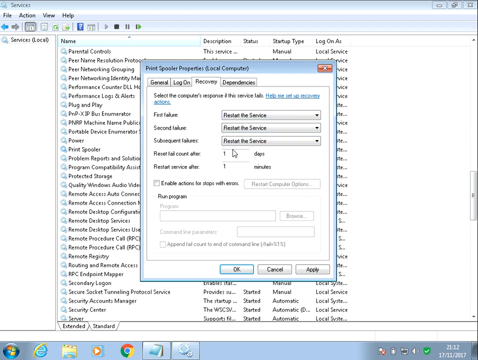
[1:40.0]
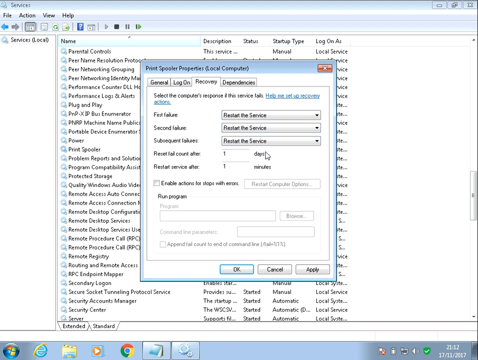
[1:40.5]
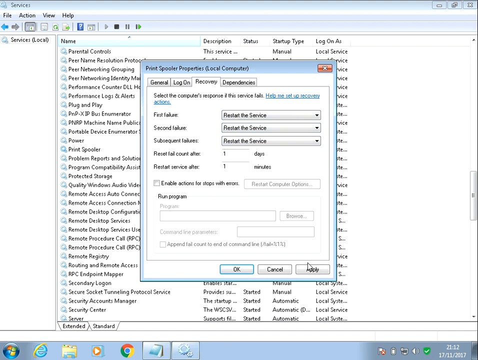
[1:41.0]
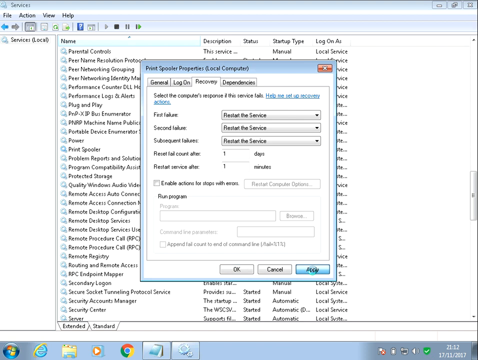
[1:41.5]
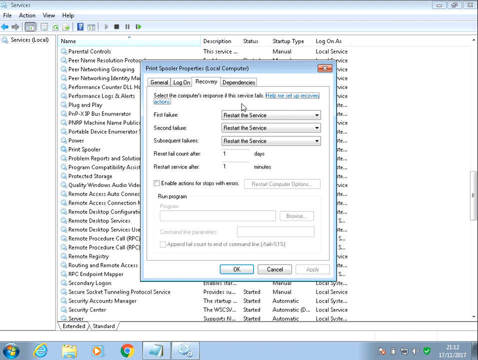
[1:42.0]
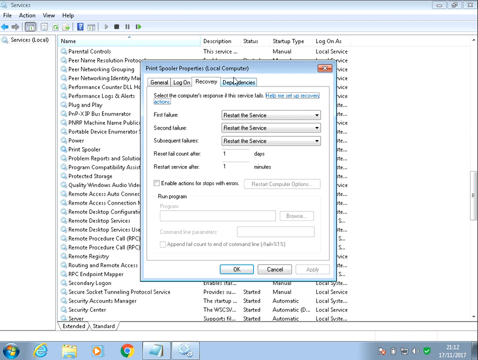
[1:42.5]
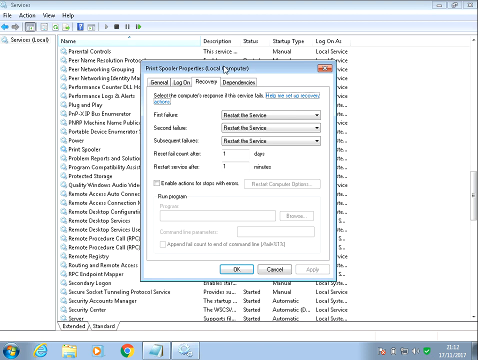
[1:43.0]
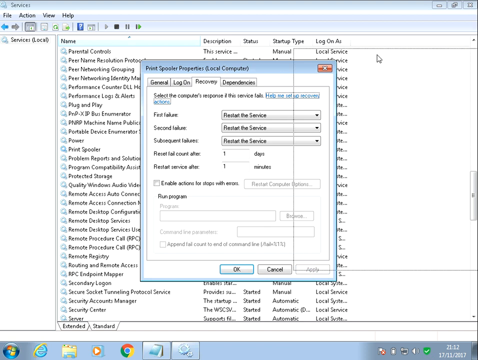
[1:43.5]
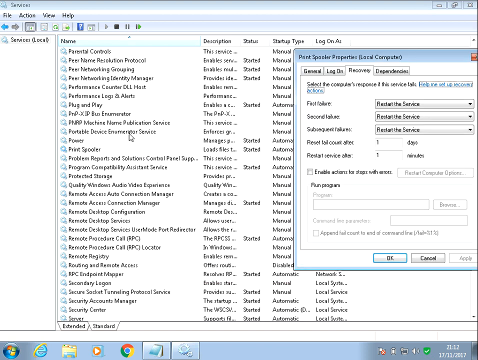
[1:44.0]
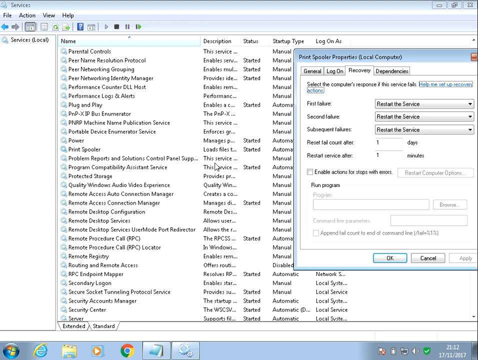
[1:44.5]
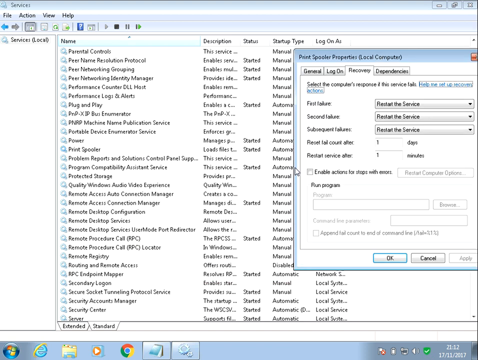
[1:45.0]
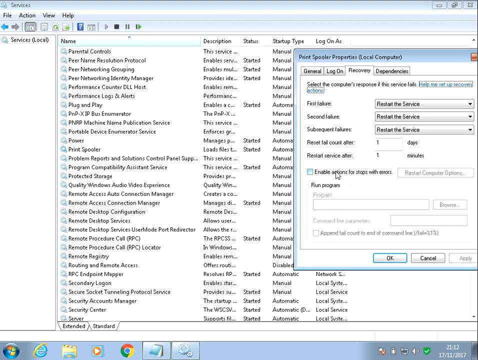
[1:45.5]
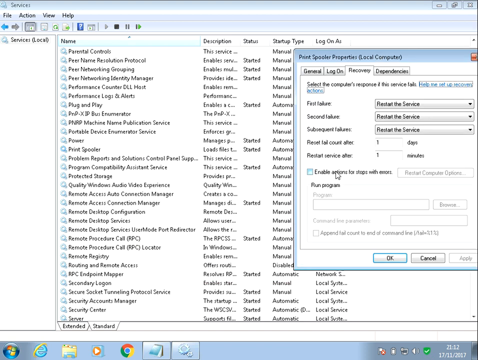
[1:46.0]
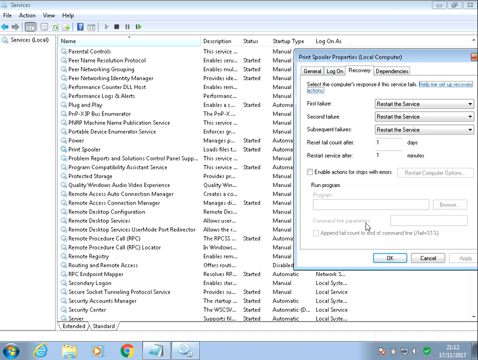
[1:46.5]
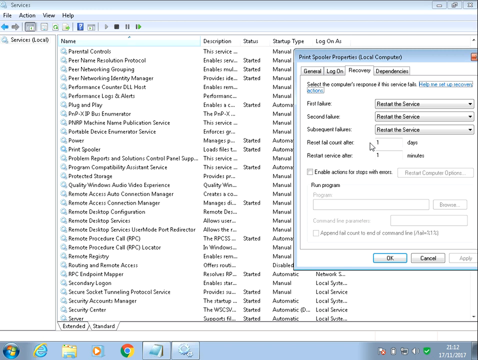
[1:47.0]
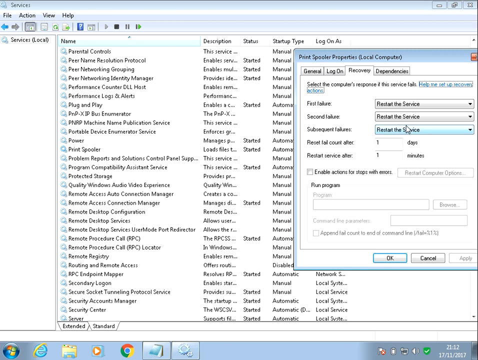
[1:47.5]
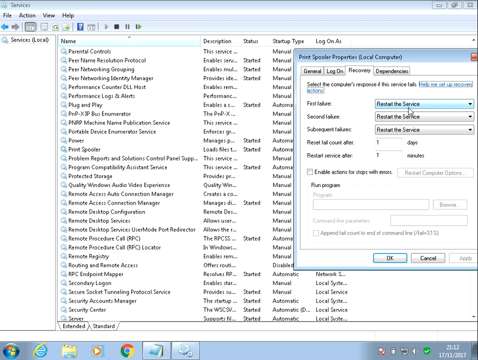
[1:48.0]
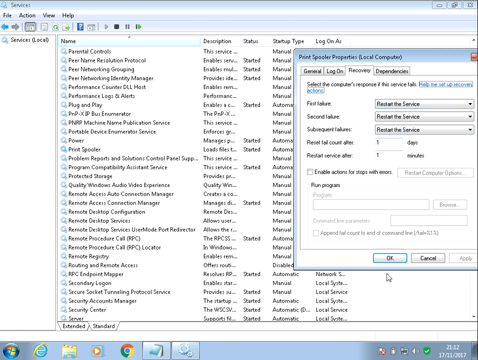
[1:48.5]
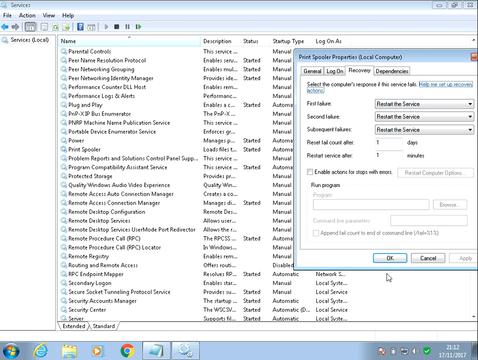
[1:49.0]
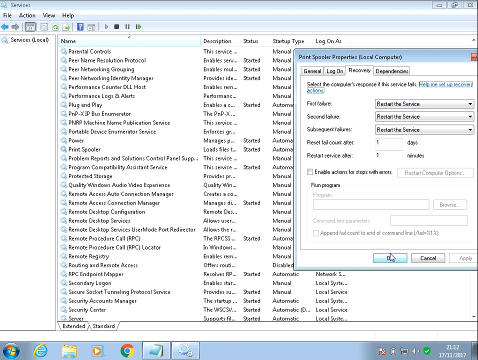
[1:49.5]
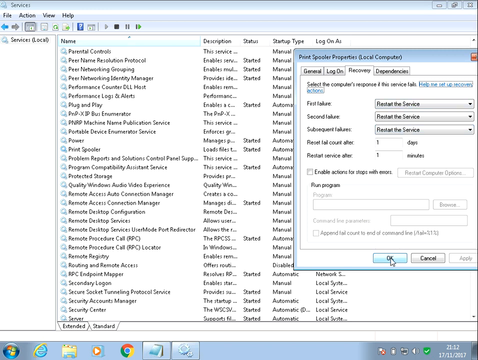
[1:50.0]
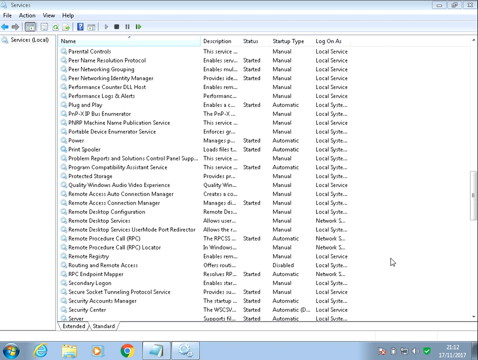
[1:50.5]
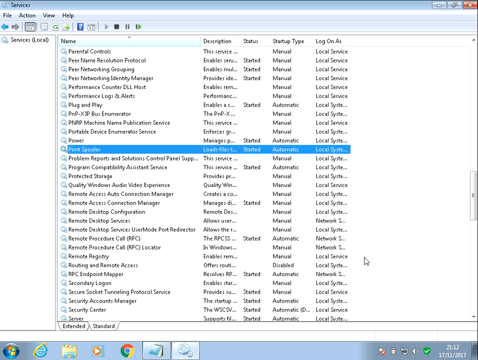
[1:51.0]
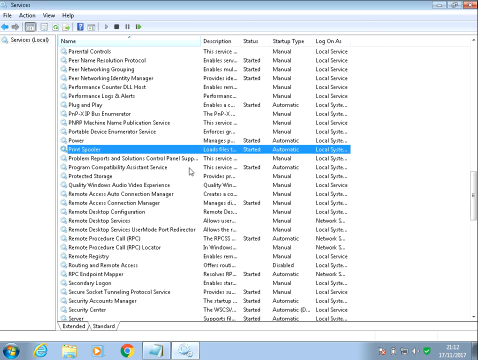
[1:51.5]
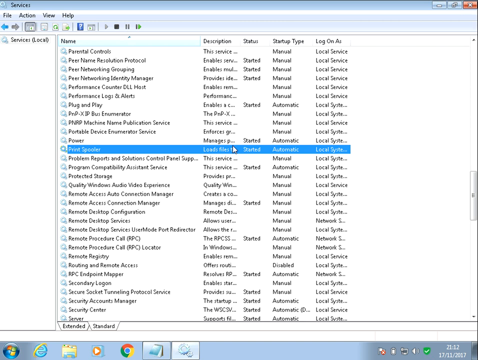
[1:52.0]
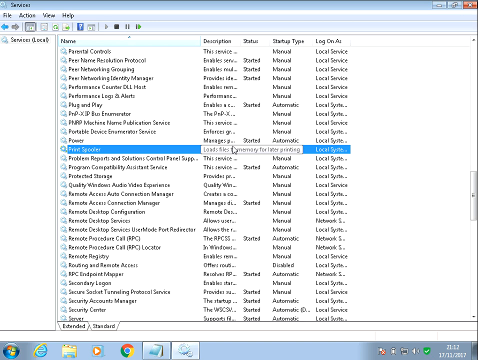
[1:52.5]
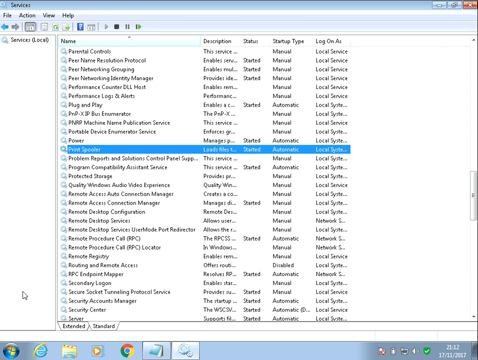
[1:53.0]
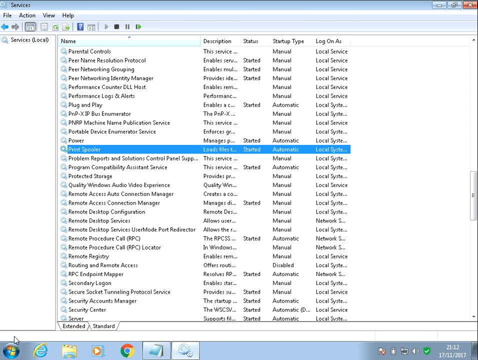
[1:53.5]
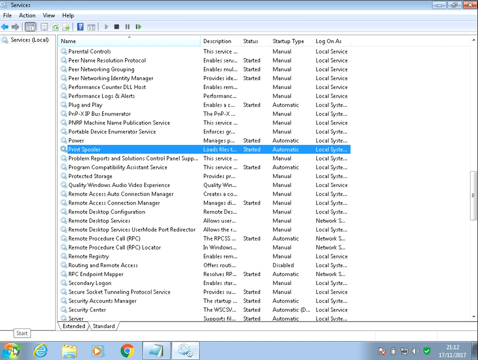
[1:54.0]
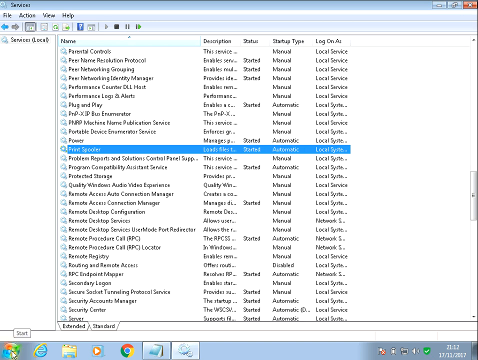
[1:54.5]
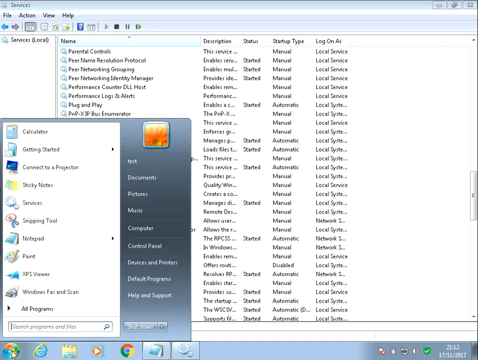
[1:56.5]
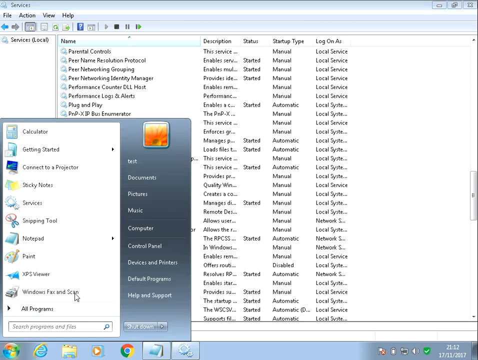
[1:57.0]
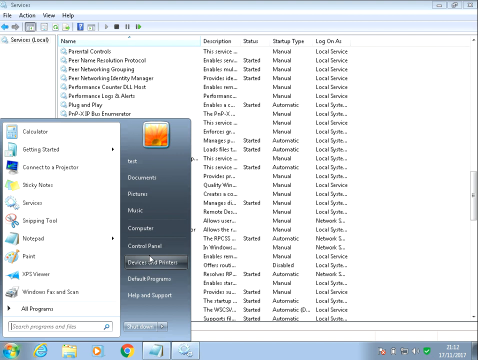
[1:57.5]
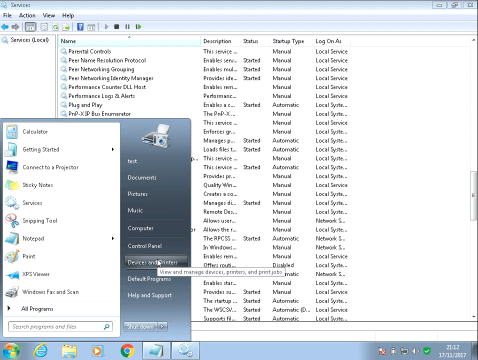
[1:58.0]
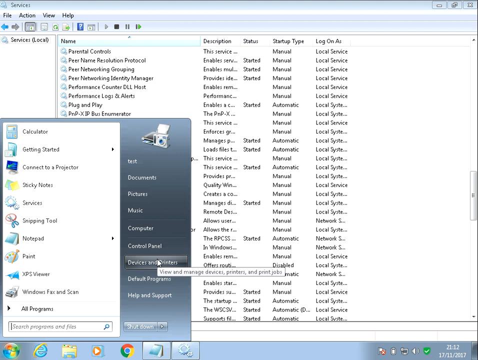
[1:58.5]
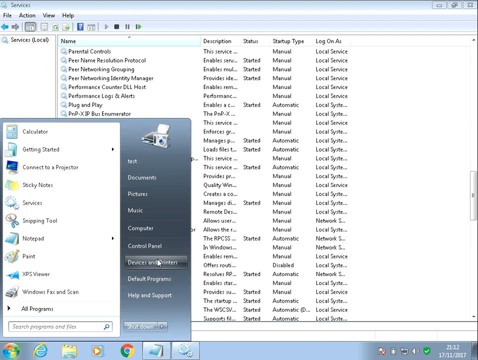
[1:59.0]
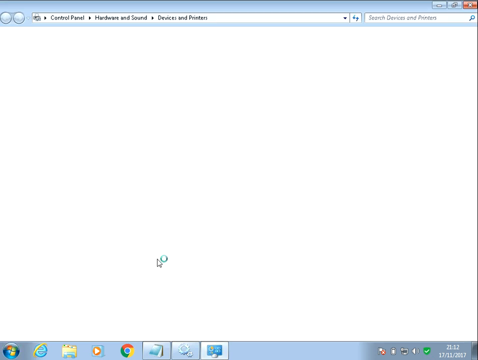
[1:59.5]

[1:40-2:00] The frame is a little wider than it is tall. The Services tool is open in the background, indicated by the word "services" in the upper left. Overlaid on top is another window that says "print spooler properties" in the upper left with "local computer" in parentheses, and four tabs right below: General, Logon, Recovery and Dependencies. The Recovery tab is selected. The user hits Apply and moves the window toward the right to see what is underneath, then goes down and clicks OK. In Services, print spooler is highlighted and appears to have started. He then selects Windows and goes into device information. The Services list also includes entries such as security center, security accounts manager, secure socket tunneling protocol service, and power.